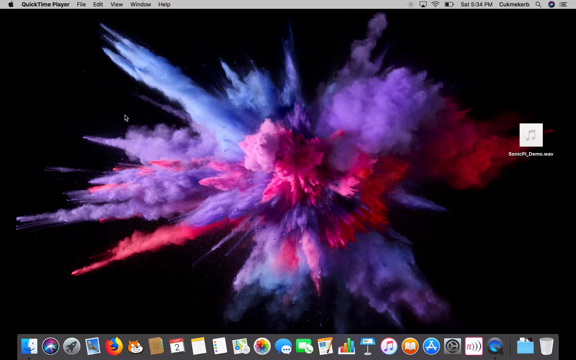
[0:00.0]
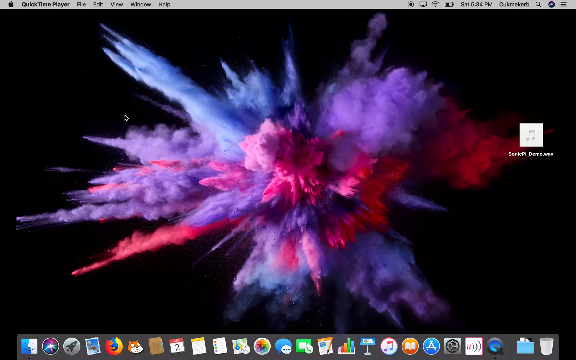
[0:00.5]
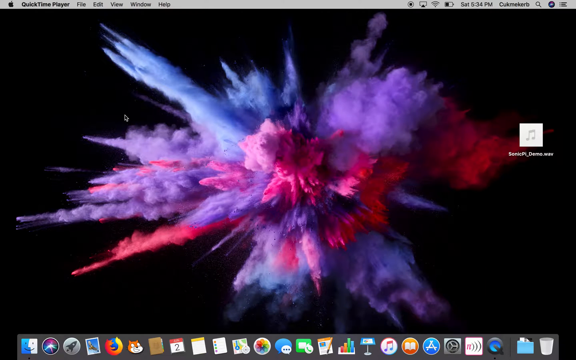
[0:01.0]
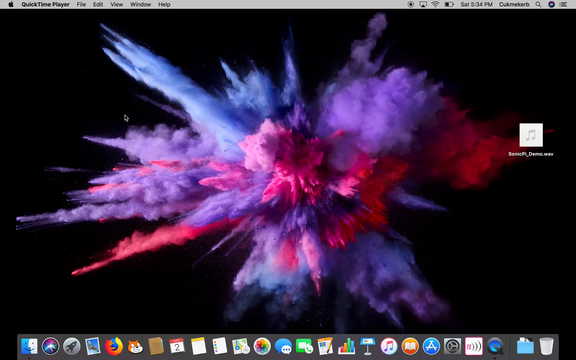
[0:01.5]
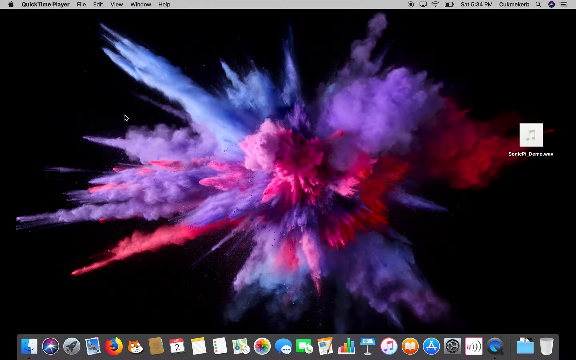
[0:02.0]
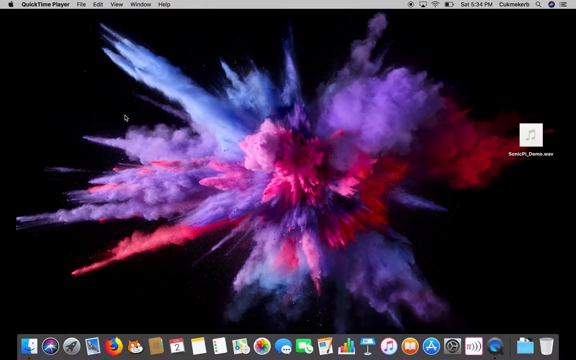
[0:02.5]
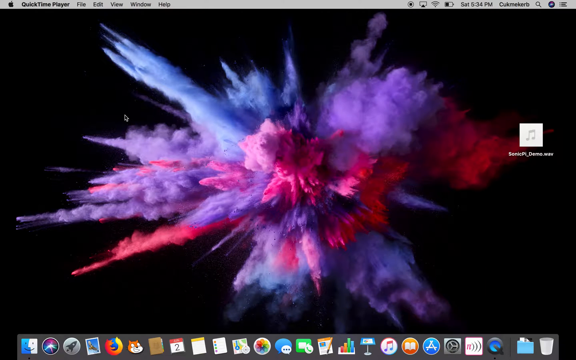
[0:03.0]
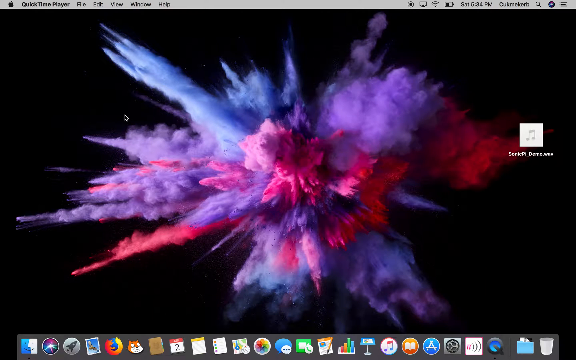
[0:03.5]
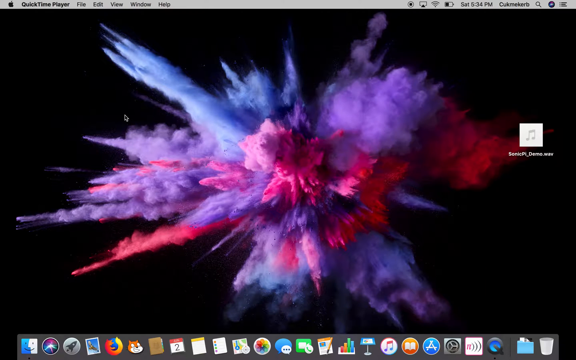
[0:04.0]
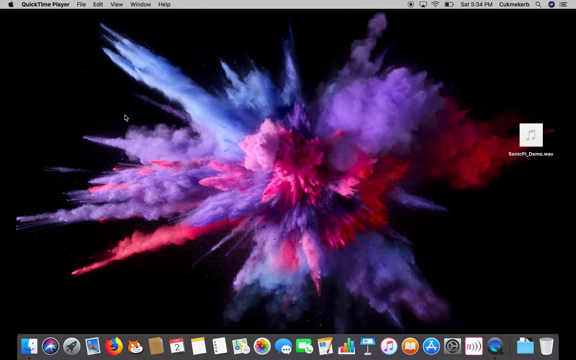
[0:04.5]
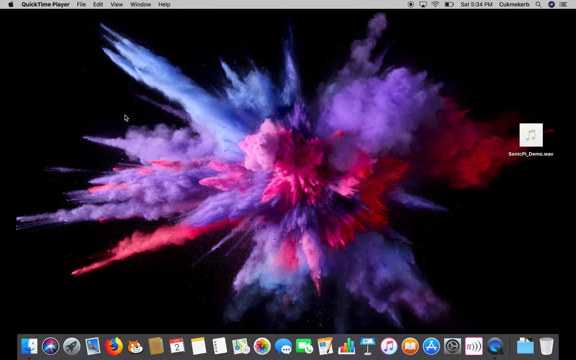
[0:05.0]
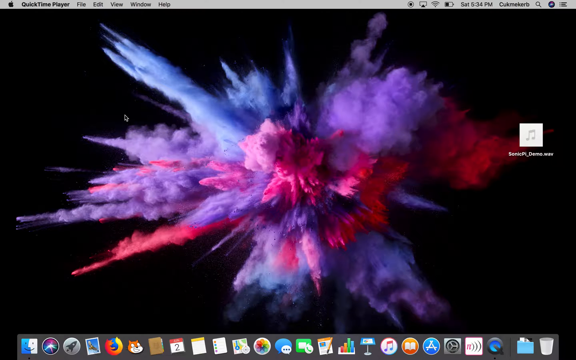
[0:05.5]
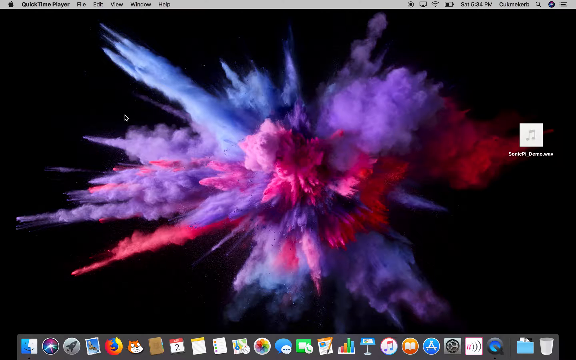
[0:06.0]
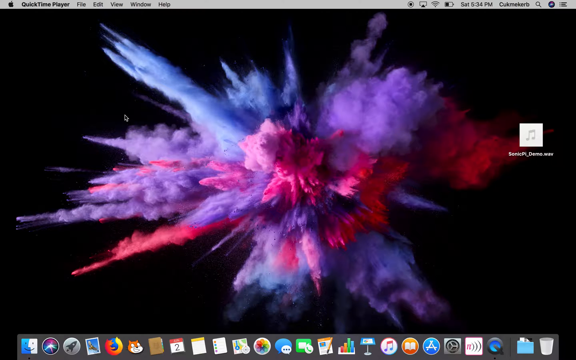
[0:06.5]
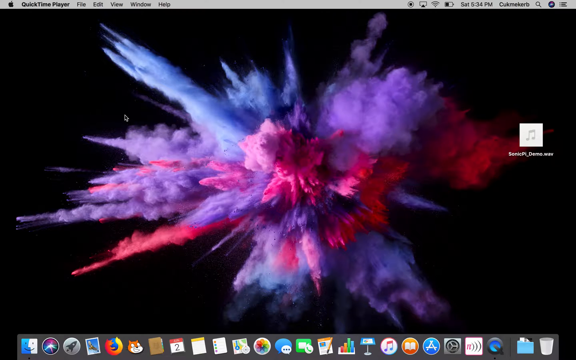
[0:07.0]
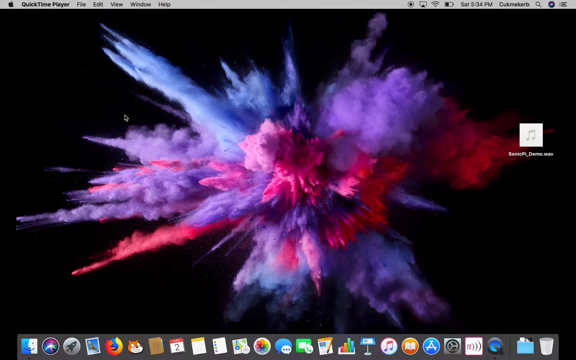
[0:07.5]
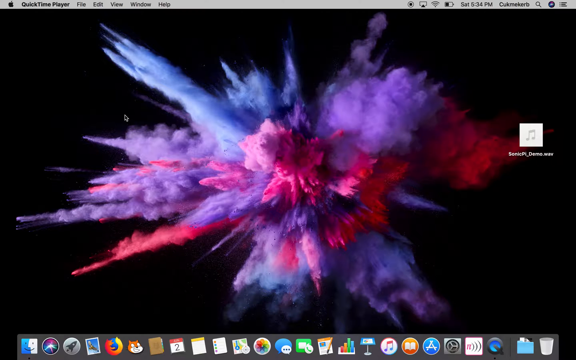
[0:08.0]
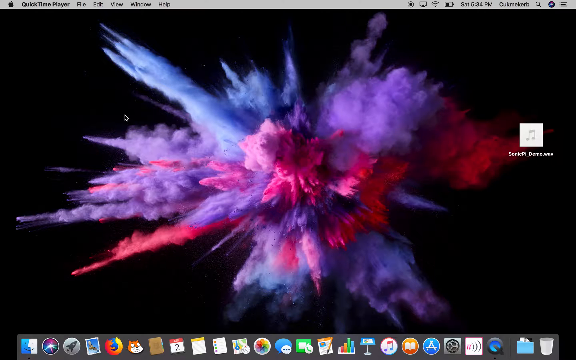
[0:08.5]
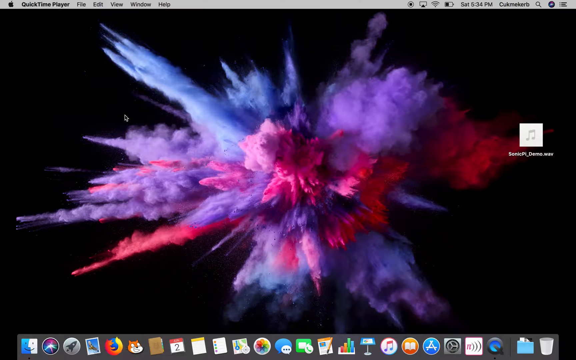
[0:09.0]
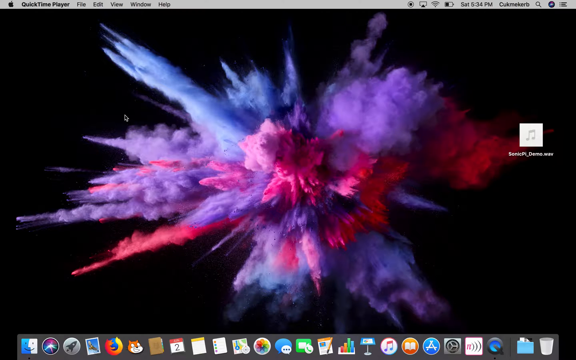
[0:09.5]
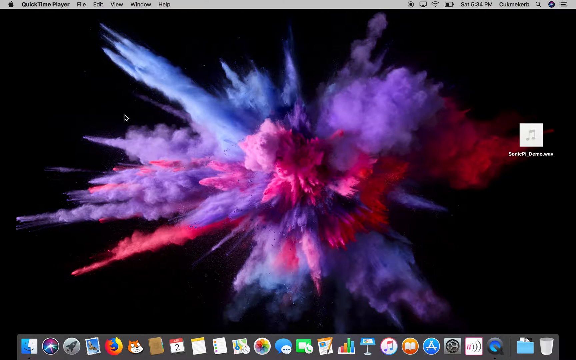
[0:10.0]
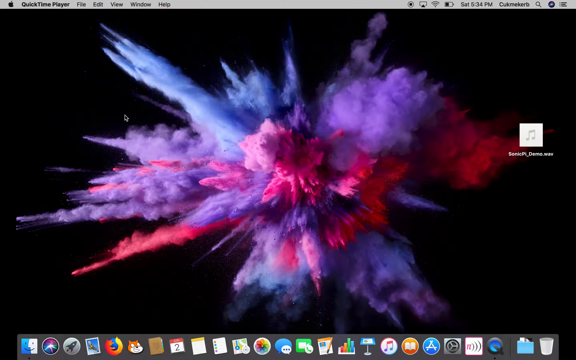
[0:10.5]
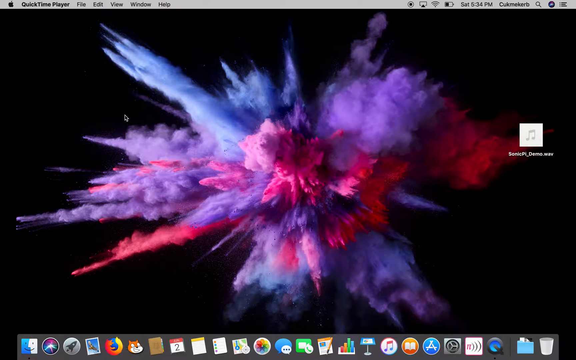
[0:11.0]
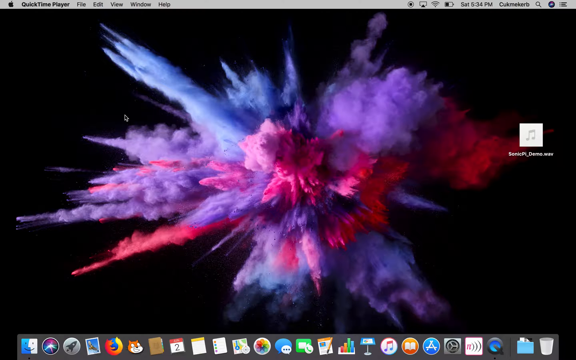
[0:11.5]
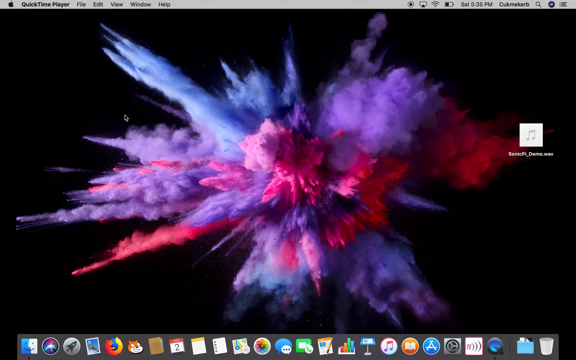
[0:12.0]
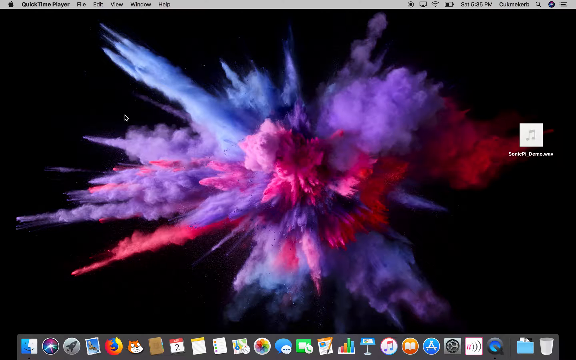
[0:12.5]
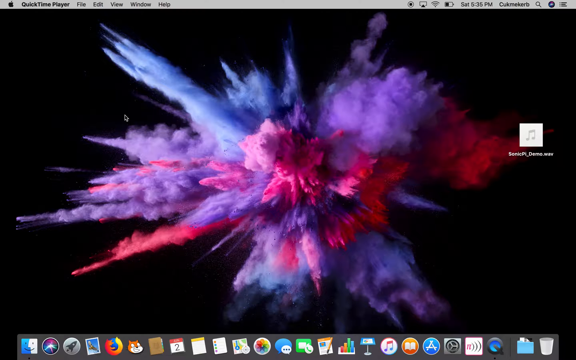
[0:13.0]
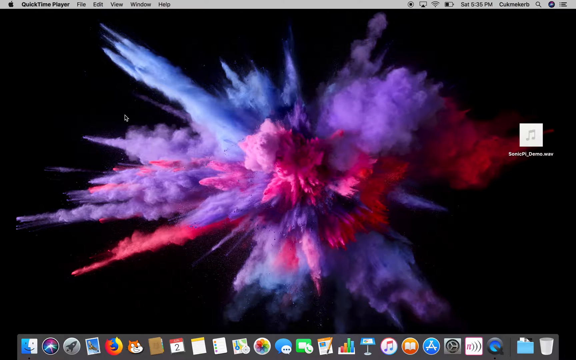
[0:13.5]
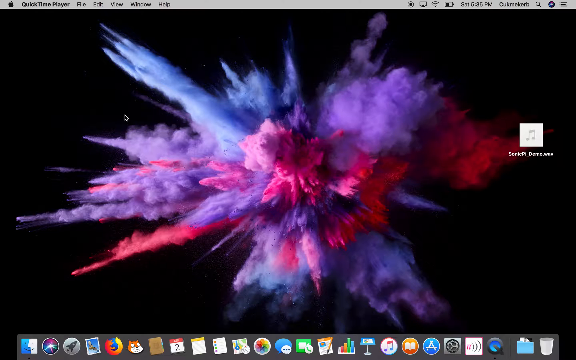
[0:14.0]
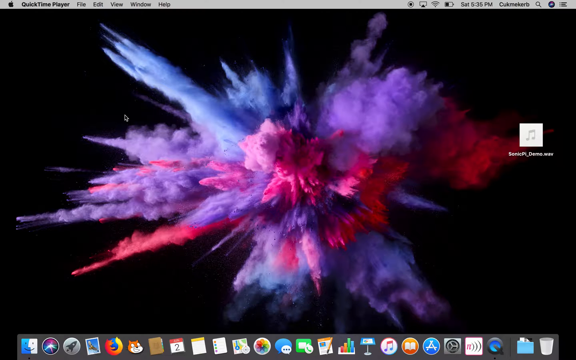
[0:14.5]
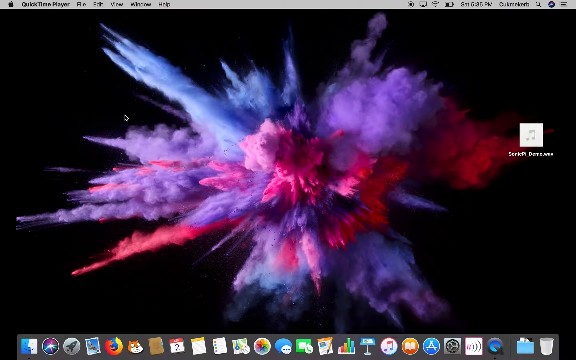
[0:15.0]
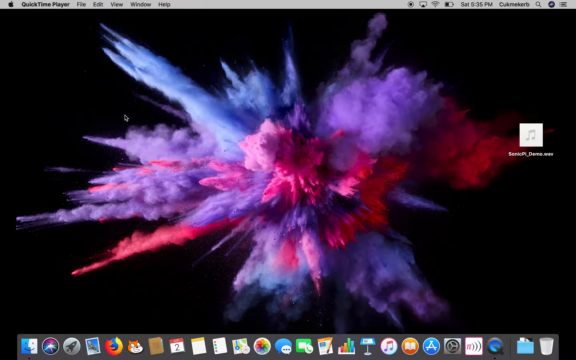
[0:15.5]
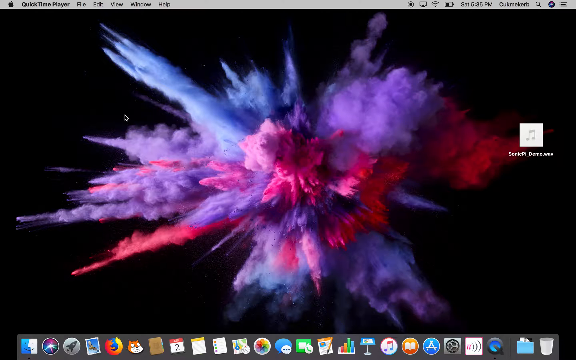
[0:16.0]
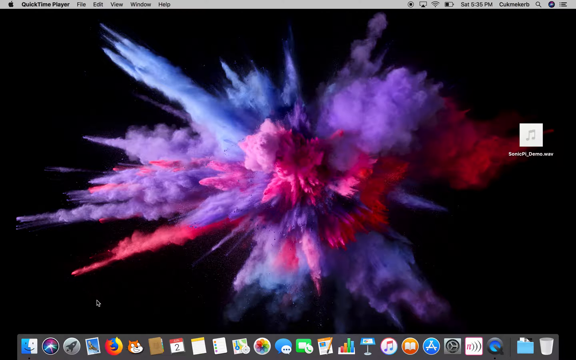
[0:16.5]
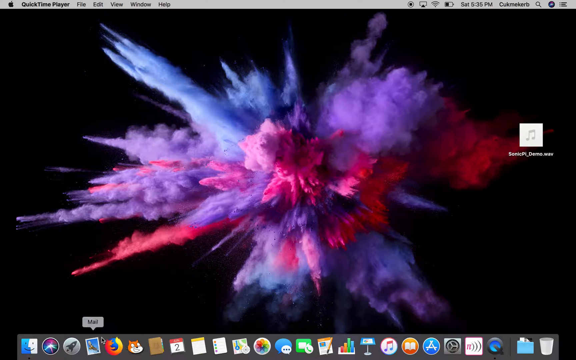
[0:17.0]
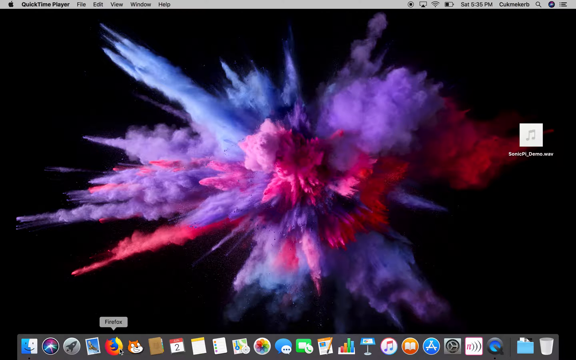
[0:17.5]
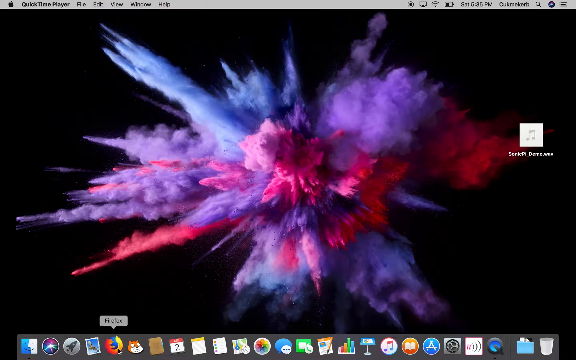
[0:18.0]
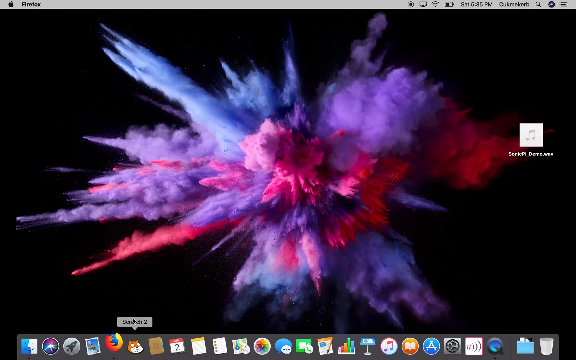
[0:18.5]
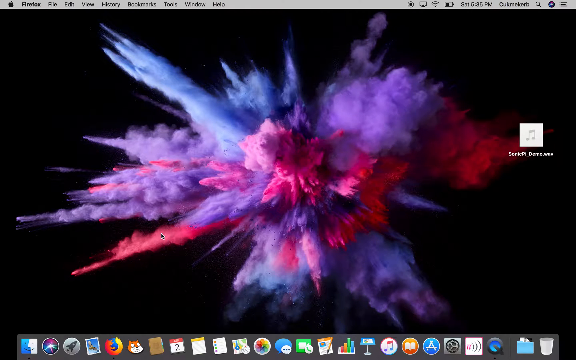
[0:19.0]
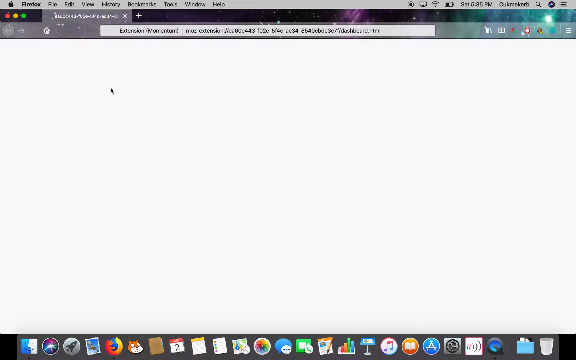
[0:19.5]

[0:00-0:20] The video opens on a desktop screen whose background shows exploding colors such as purple, red and blue. The background is a clear, HD macro shot of something at the moment it explodes, looking perhaps like a bath bomb or a pinball exploding. There are no apps or folders on the desktop except one item, which looks like a music file. The bar at the very top shows QuickTime Player and the menu items profile, edit, view, window and help, along with the time, the day, the battery level and the Wi-Fi. The cursor moves around, goes to the desktop icon dashboard and clicks on Firefox to open the browser.